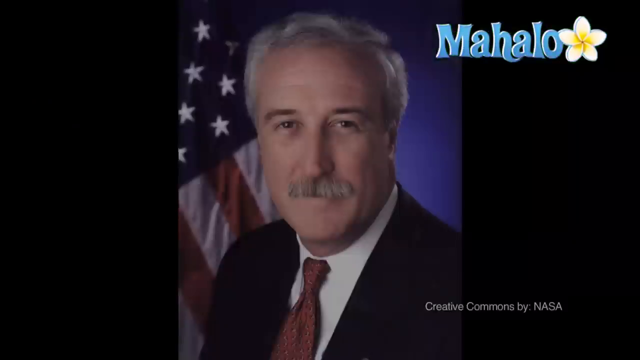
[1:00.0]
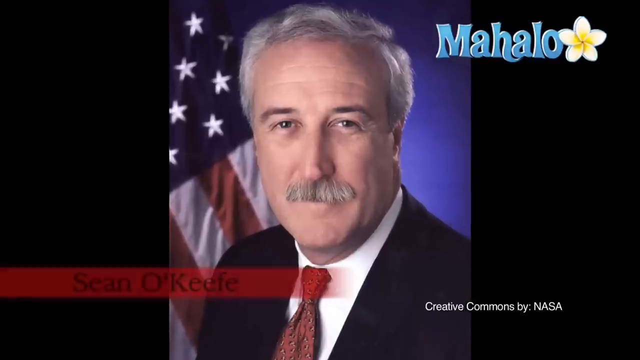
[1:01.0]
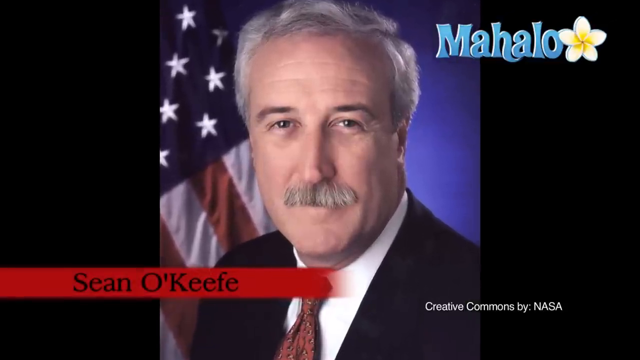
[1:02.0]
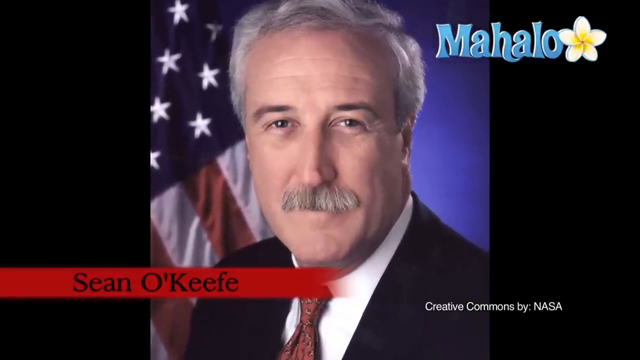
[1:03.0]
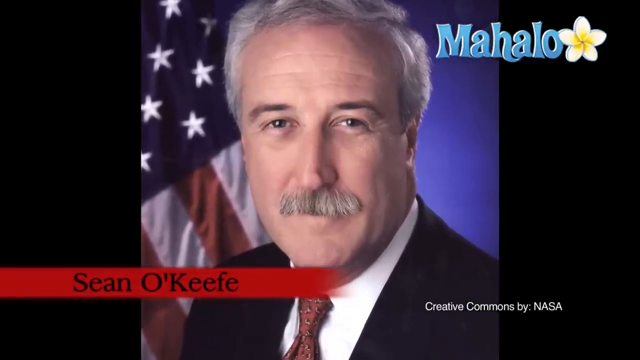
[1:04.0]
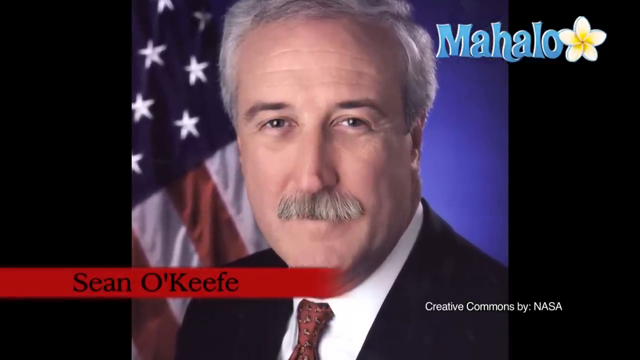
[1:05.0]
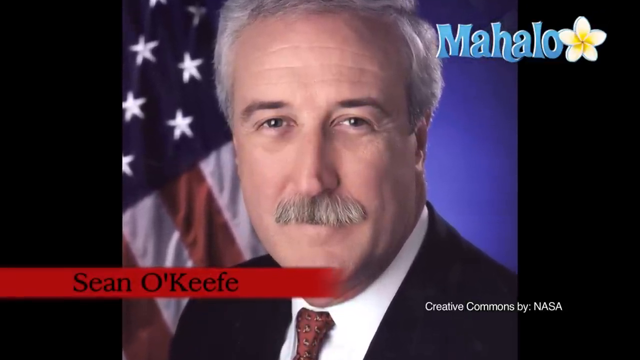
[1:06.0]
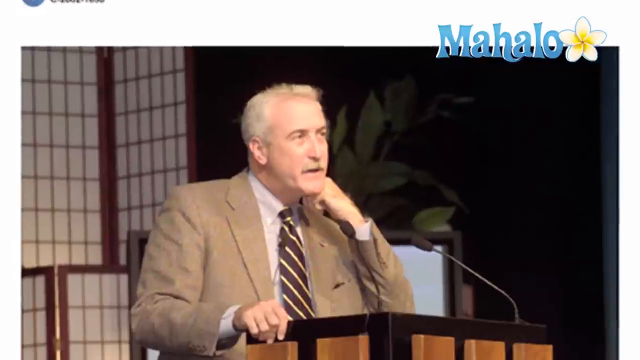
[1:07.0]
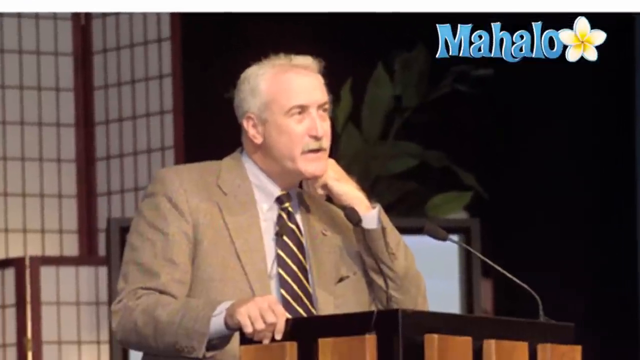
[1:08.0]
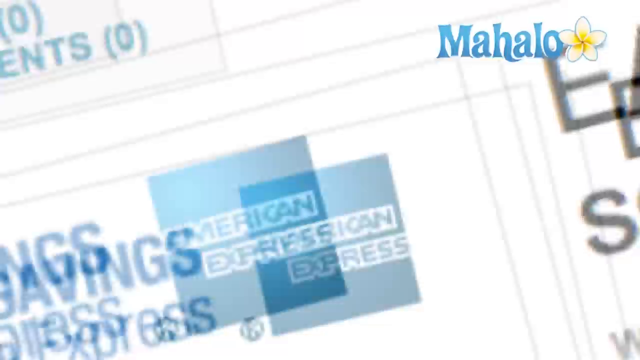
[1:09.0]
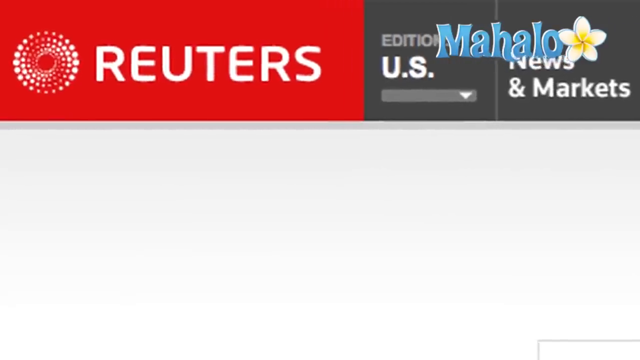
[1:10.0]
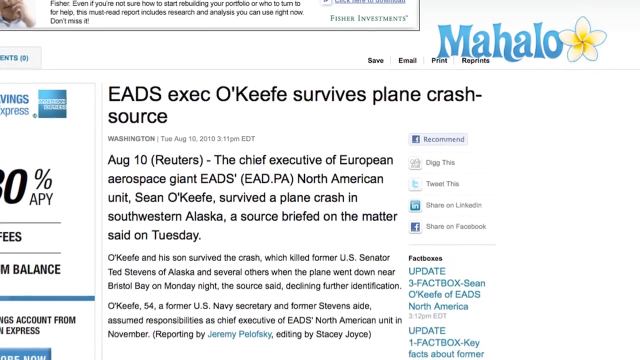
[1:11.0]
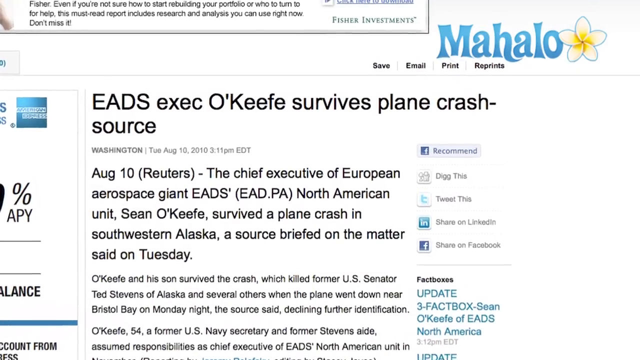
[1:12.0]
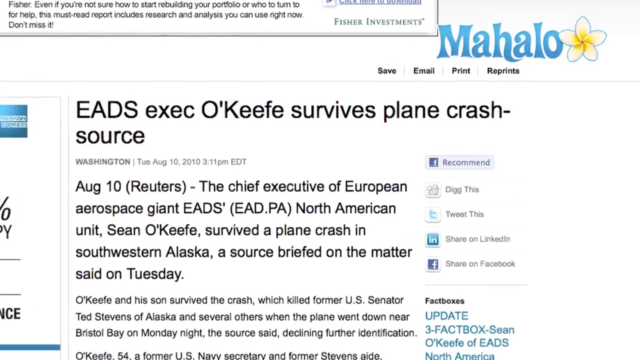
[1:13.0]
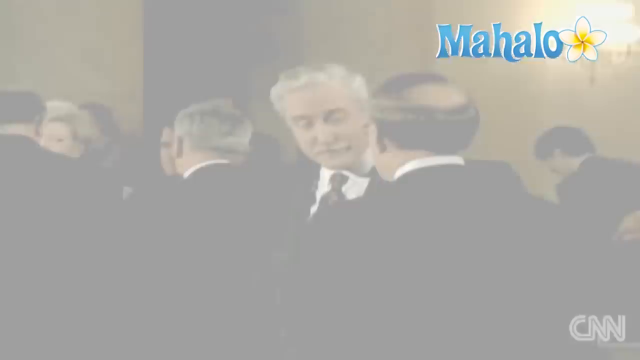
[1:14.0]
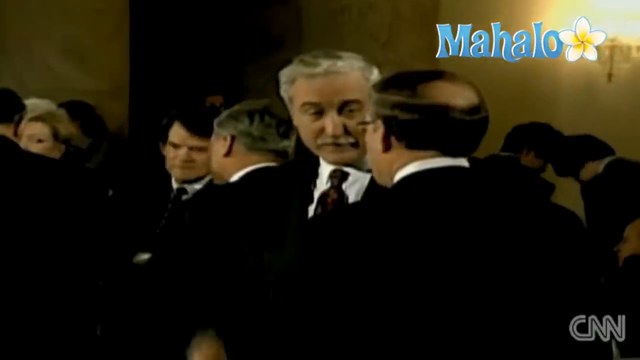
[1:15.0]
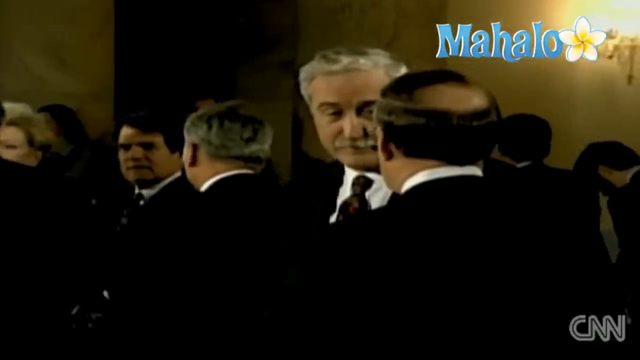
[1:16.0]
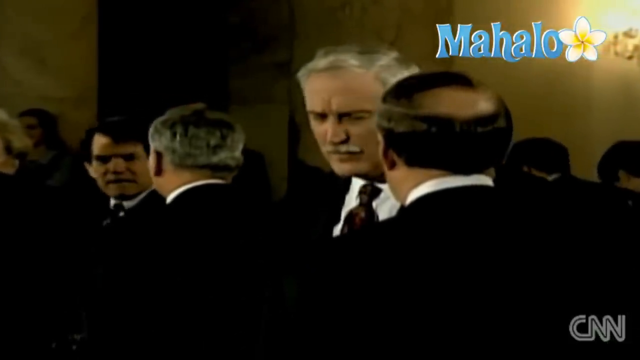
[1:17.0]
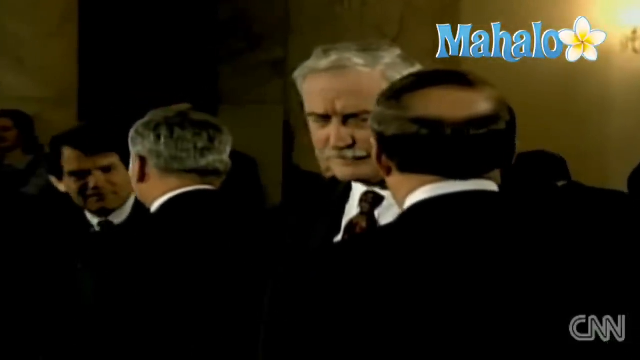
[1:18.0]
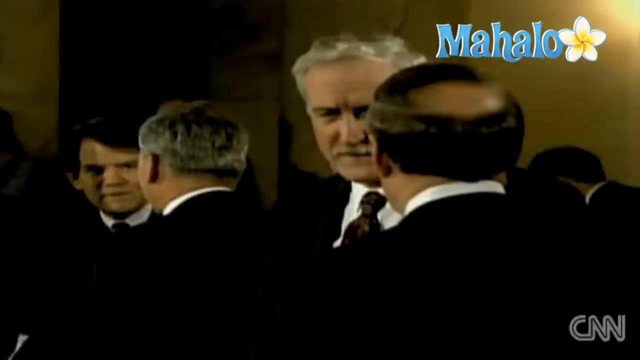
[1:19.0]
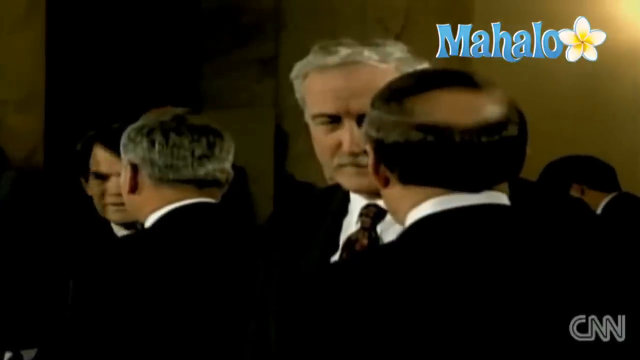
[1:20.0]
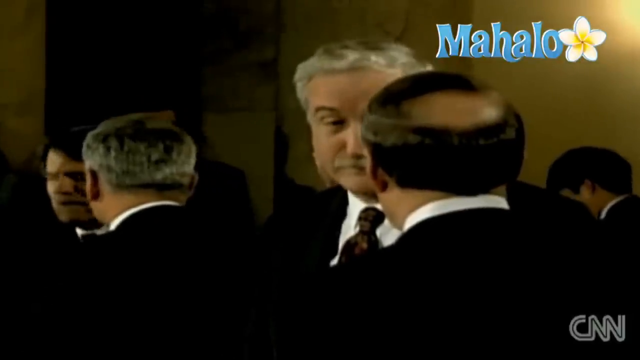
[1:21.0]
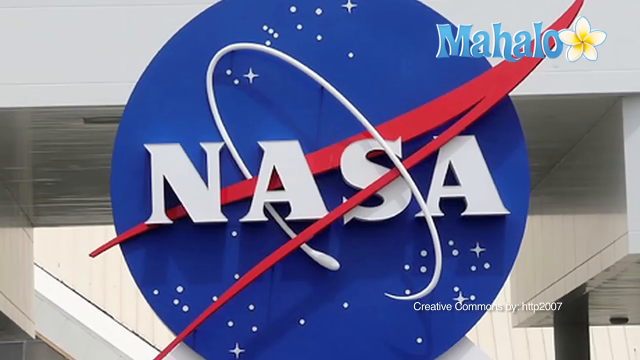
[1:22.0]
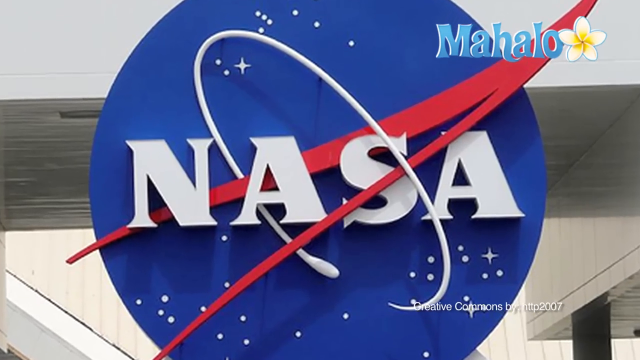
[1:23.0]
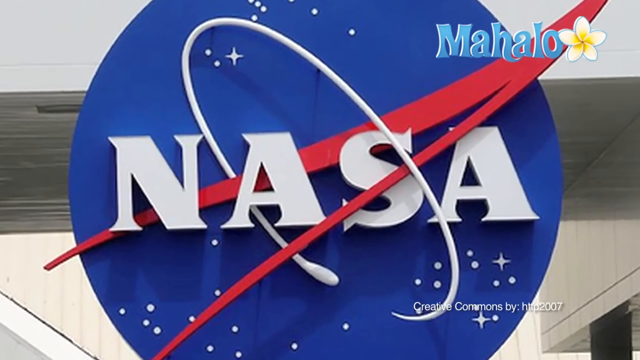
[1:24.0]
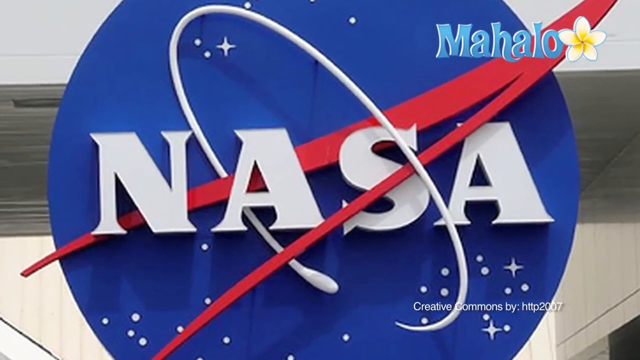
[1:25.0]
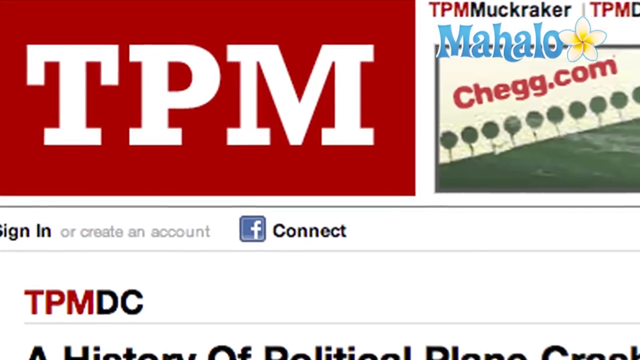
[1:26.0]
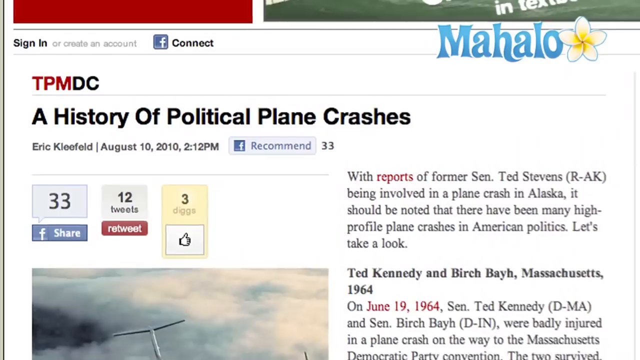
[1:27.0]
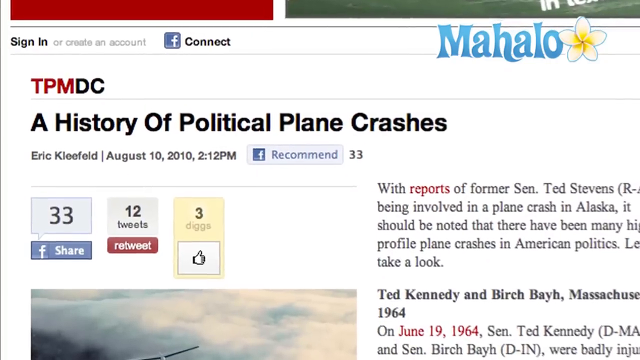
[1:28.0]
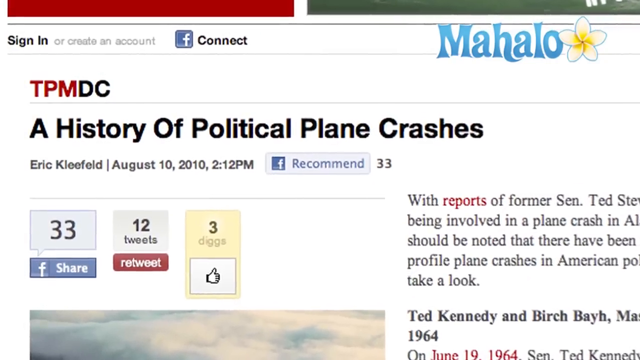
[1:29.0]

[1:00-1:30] Sean O'Keefe, an older white man, appears in a picture, formally dressed in a black suit, white shirt and red tie, with a smile on his face and the American flag in the background. O'Keefe is then shown on different occasions; in one he seems to be giving a speech. A news article reads "O'Keefe survives plane crash", posted in Washington on Tuesday, August 10, 2010; the web page seems easy to read and includes links to different social media platforms. O'Keefe appears in a number of settings talking to other dignitaries, always formally dressed and with a stern face. A NASA sign follows, and then a news article that reads "a history of political plane crashes".